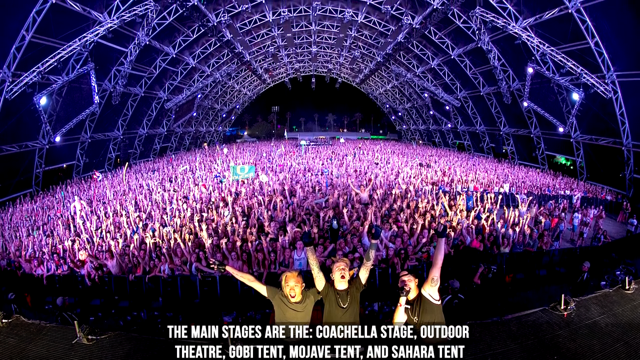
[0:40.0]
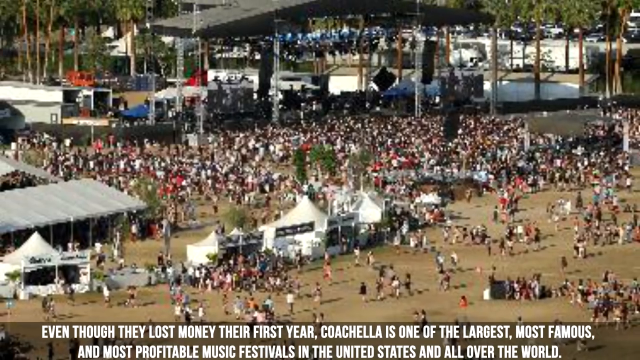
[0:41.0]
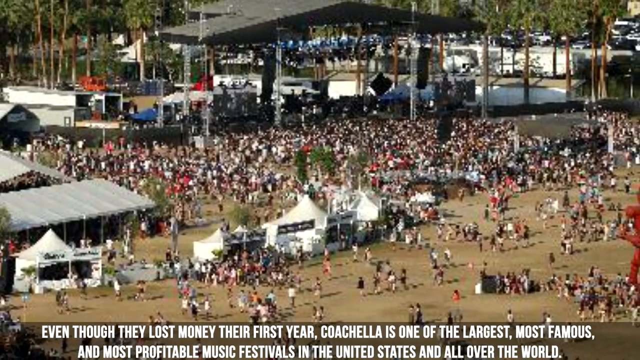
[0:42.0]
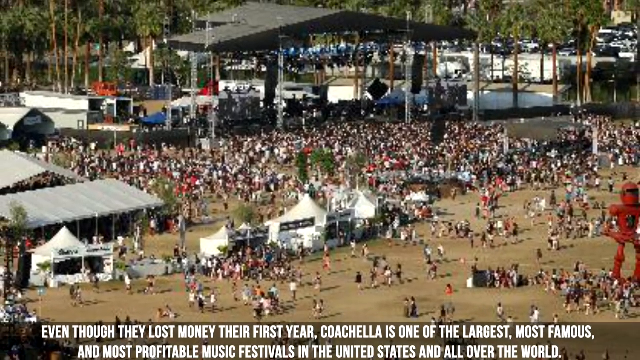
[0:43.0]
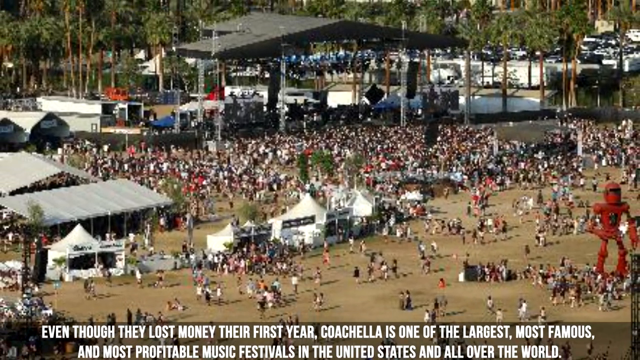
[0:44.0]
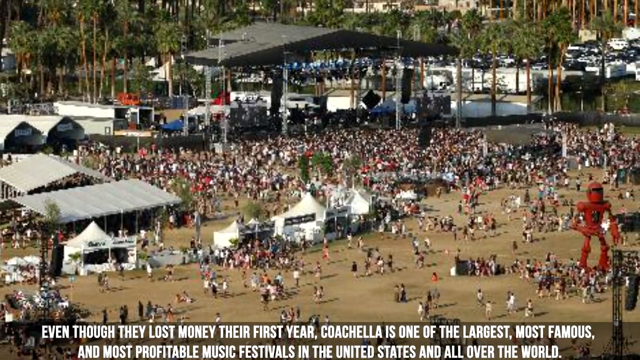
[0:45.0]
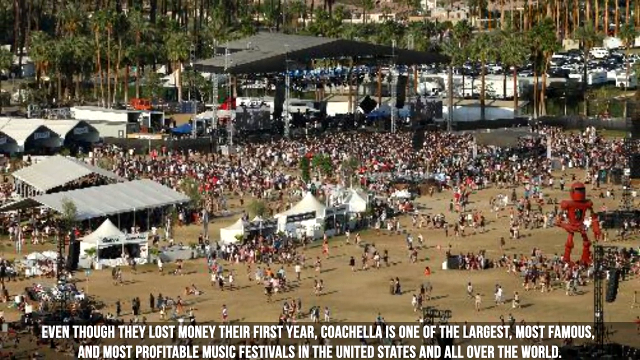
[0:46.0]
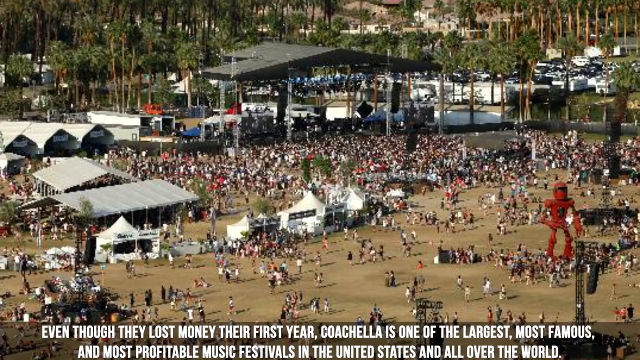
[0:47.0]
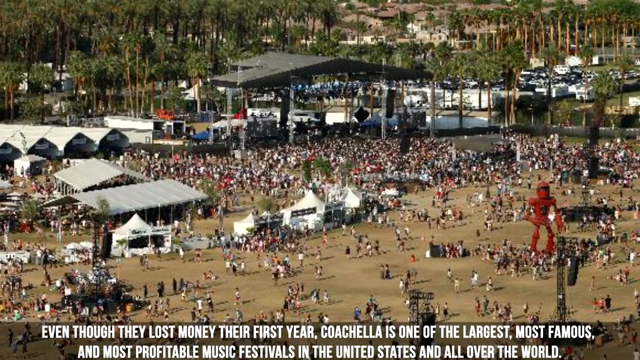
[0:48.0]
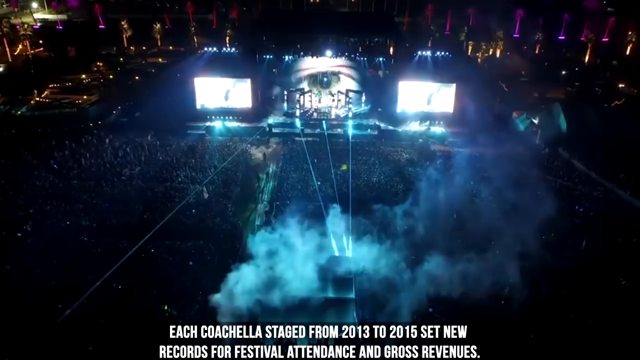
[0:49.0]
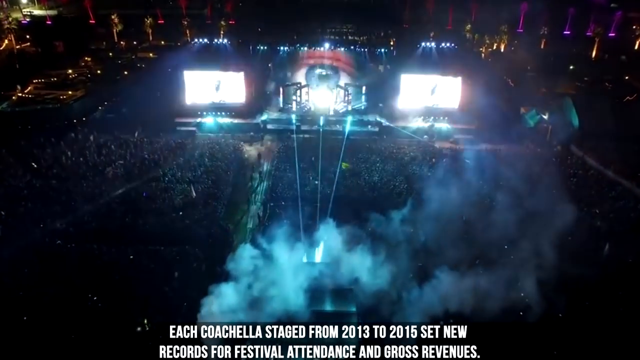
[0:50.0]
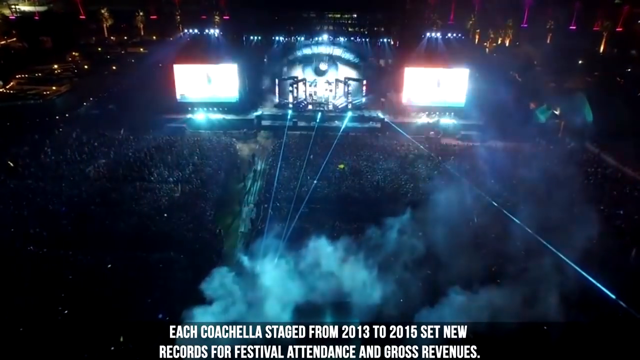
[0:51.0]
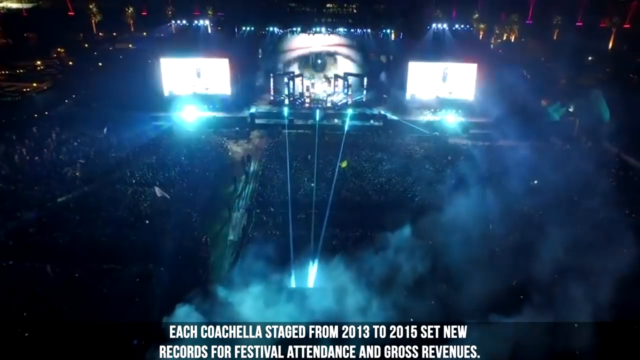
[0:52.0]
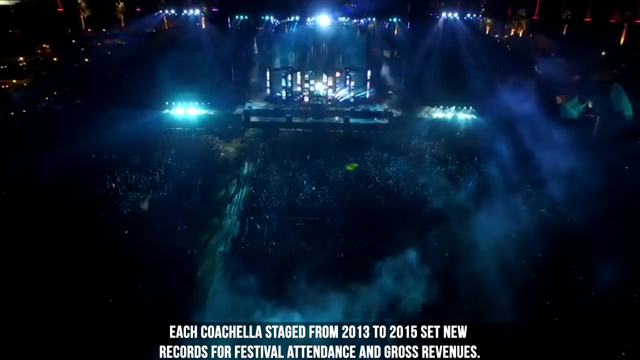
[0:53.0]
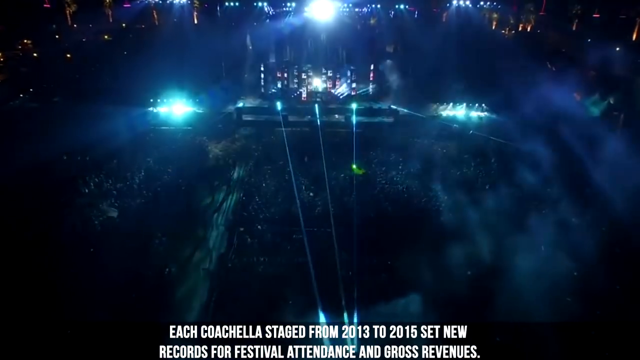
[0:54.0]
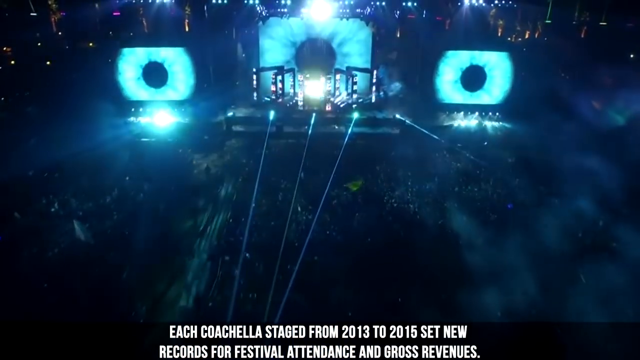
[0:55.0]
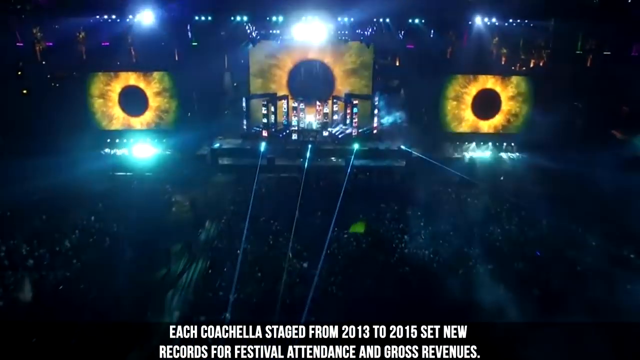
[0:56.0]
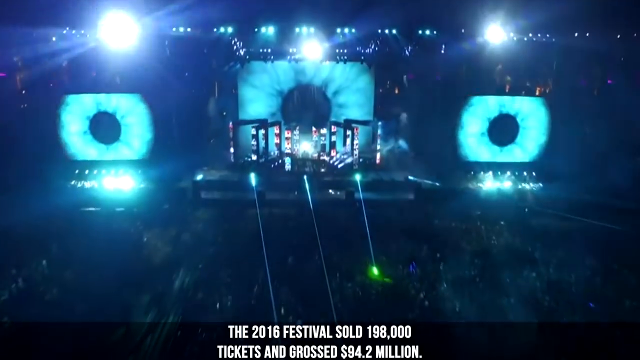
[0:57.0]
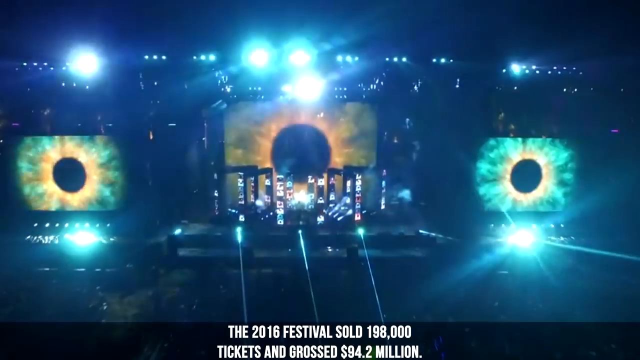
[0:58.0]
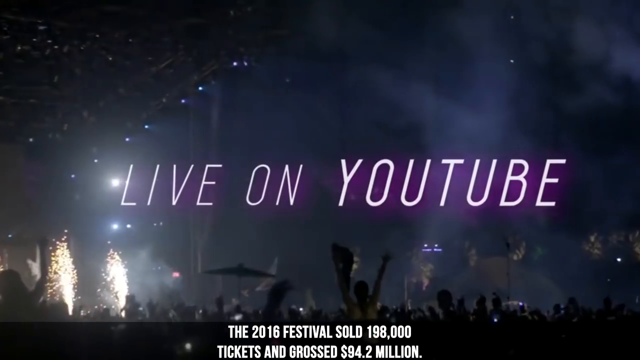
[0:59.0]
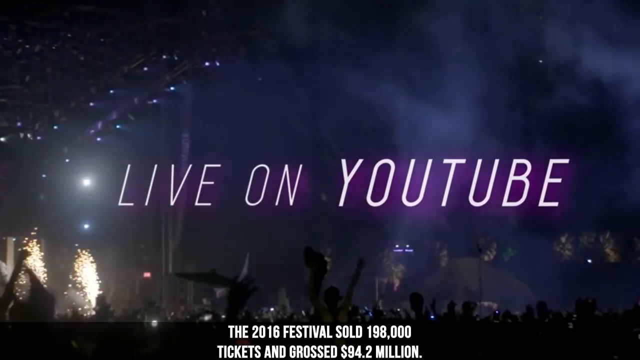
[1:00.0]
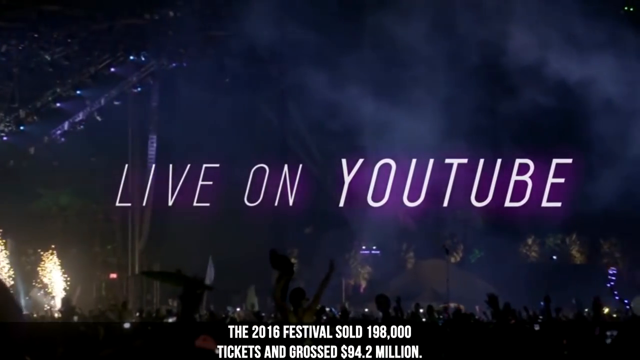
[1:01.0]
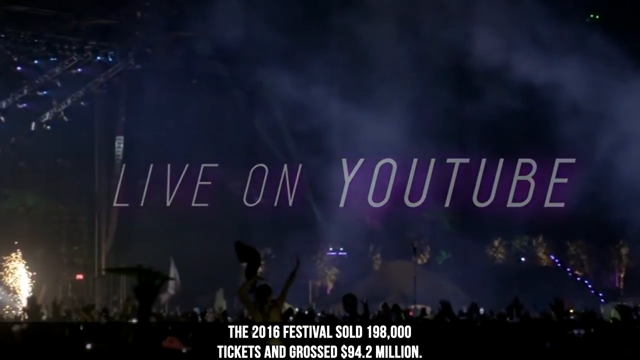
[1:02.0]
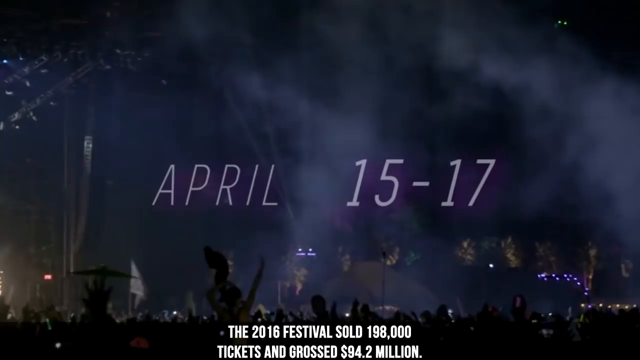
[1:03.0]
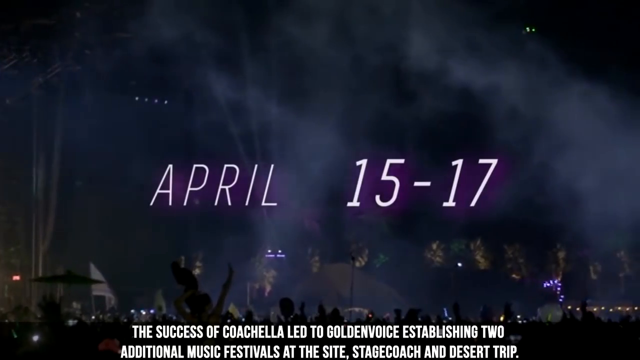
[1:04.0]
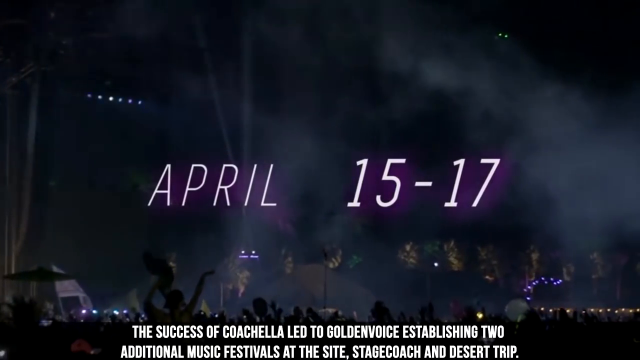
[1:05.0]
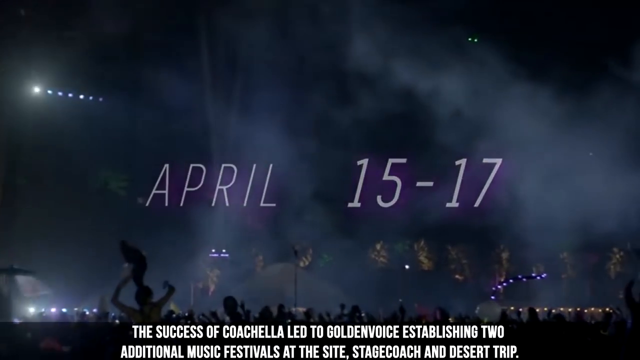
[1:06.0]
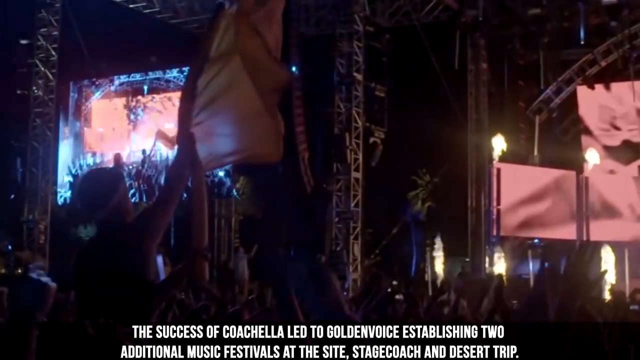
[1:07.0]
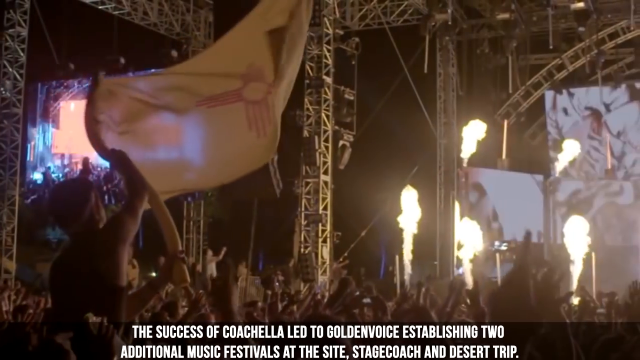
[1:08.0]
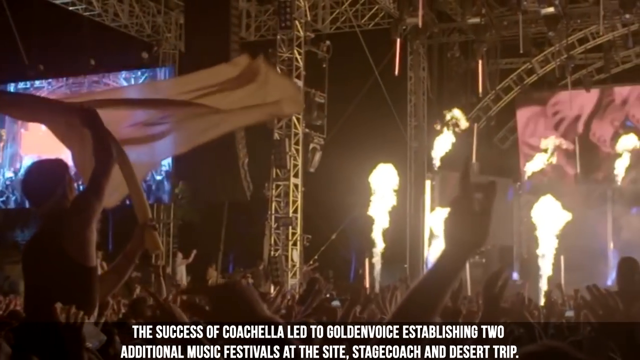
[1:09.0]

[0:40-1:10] A still image has white, all-capital text at the bottom reading "even though they lost money their first year, Coachella is one of the largest, most famous". It is a long shot of lots of tiny people walking around what looks like an outdoor festival area, on grass that looks very gray, yellow and worn, with trees and the roofs of buildings or stands in the distance. The camera zooms out, and in the right-hand corner there is what looks like a red robot statue with its right arm bent on its shoulder. A cut leads to a moving image with text at the bottom reading "each Coachella stage from 2013 to 2015 set new". The camera moves in above a massive crowd that cannot be made out because it is dark, toward a stage with two giant illuminated screens either side of its center and, at the center, what looks like a massive eyeball, perhaps on another screen. Blue lasers and lights flash out from the stage and move around the crowd, which is slightly illuminated by the screens. The eyeball in the centre screen disappears, briefly appears on the left and right screens, then disappears too. Lights flash all around, and all three screens now show a black dot surrounded by a sort of orange or green colour, like a close-up of an eyeball. The camera moves closer to the screens over the crowd as red and blue lights flash. Then an image has the text "live on YouTube" in fluorescent white at its centre, superimposed on the image. The view is from behind a crowd, where a silhouetted person holds both hands in the air with fingers stretched out, and something like a flag is being held. Text at the bottom reads "the 2016 festival sold 168,000". The camera moves right across this stage image; the "live on YouTube" text disappears and is replaced by "April 15-17", also in fluorescent white with a sort of purple tint. Text at the bottom reads "the success of Coachella led to Golden Voice establishing". Another moving image from behind a crowd shows a person on the left of the frame waving a yellow flag with their right hand; the flag seems to have a red cross on it. As the camera moves from left to right, what looks like a stage is visible in the distance, with massive flames of fire shooting into the air from it, apparently pyrotechnics.